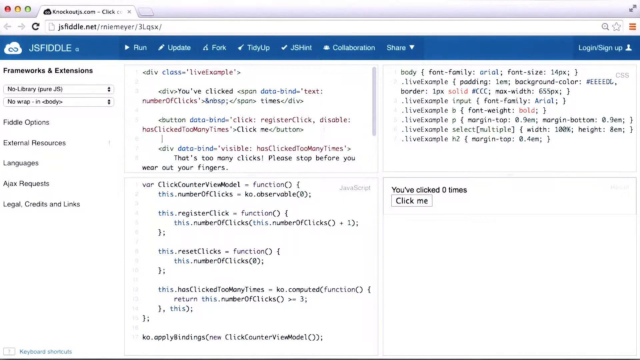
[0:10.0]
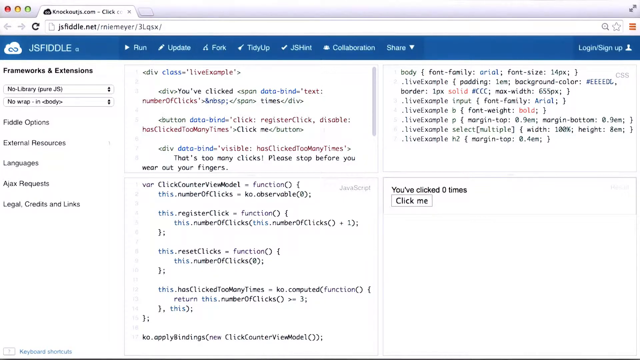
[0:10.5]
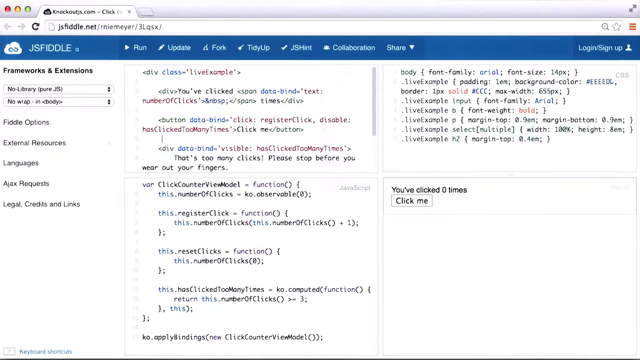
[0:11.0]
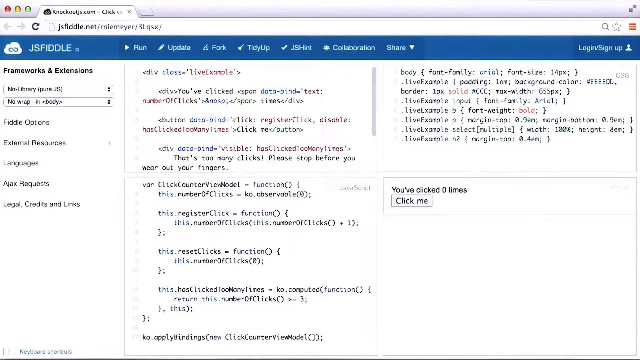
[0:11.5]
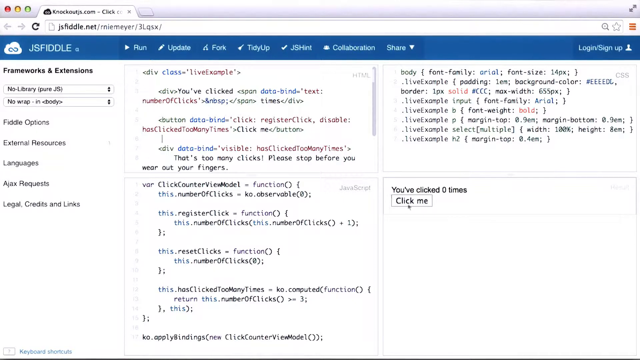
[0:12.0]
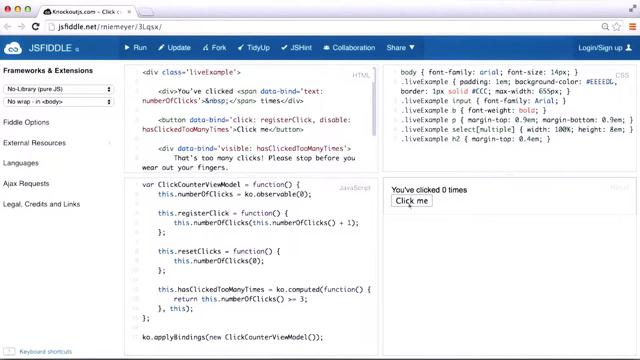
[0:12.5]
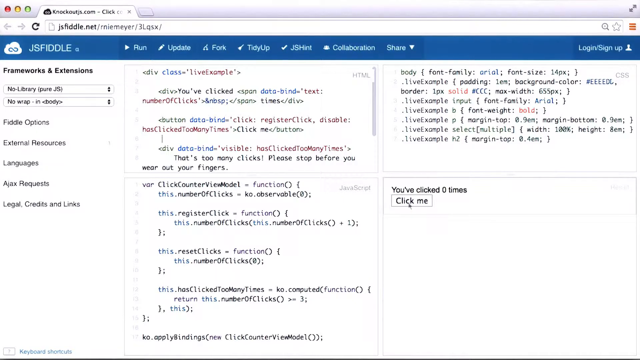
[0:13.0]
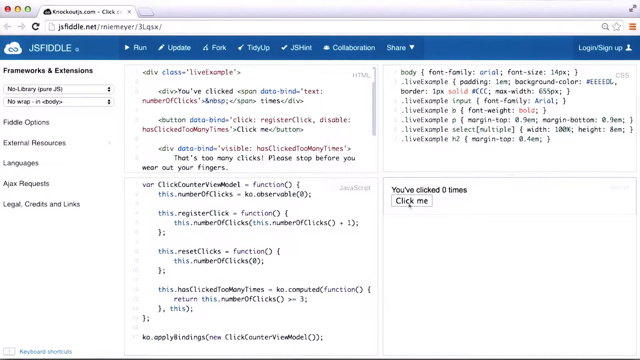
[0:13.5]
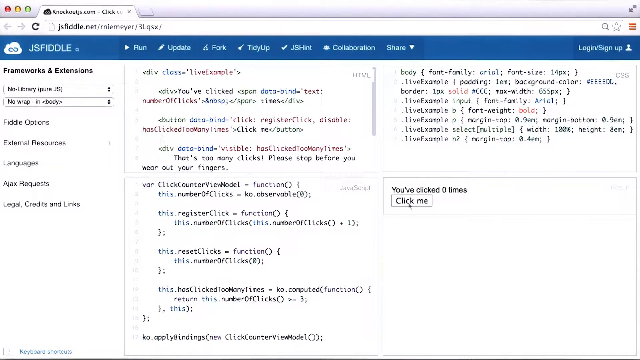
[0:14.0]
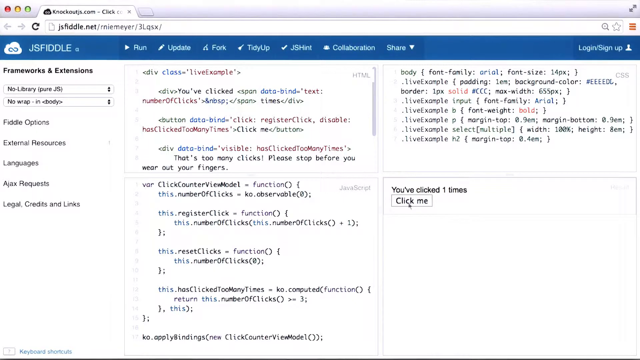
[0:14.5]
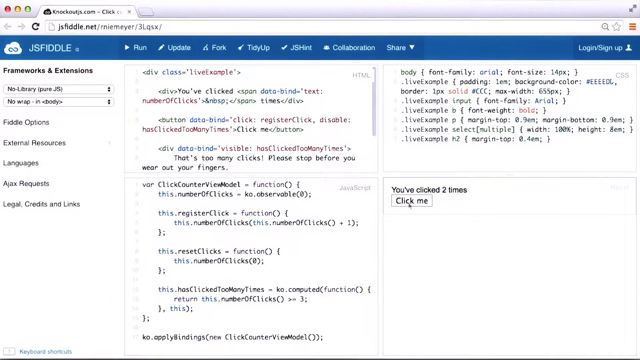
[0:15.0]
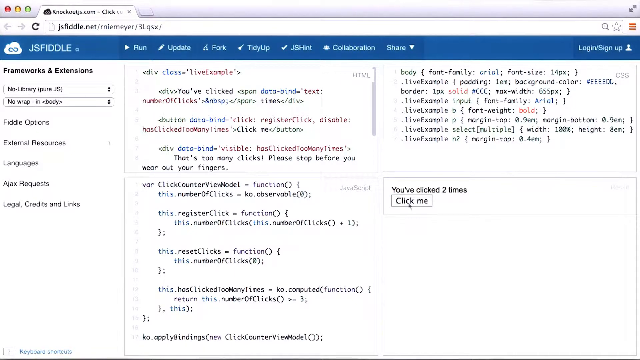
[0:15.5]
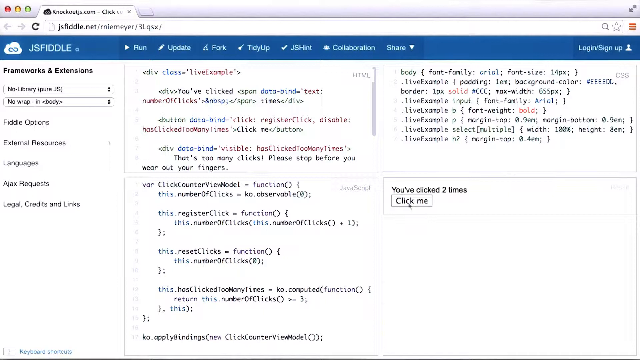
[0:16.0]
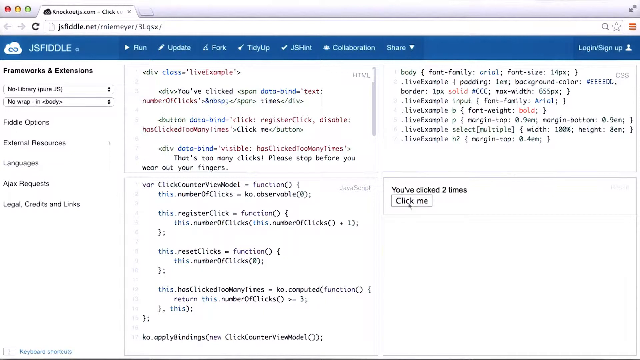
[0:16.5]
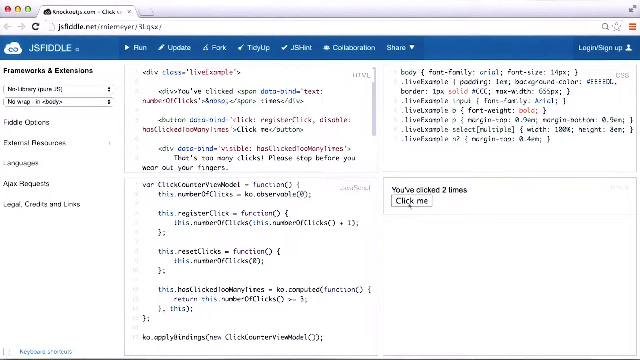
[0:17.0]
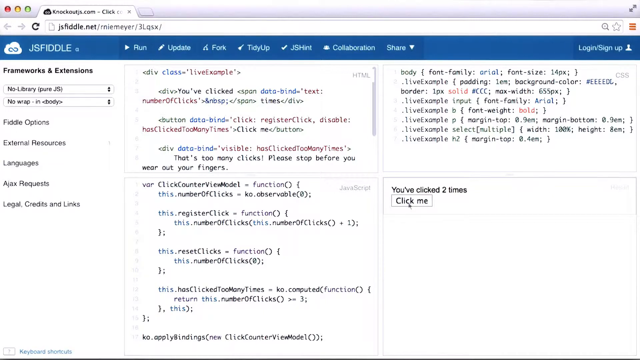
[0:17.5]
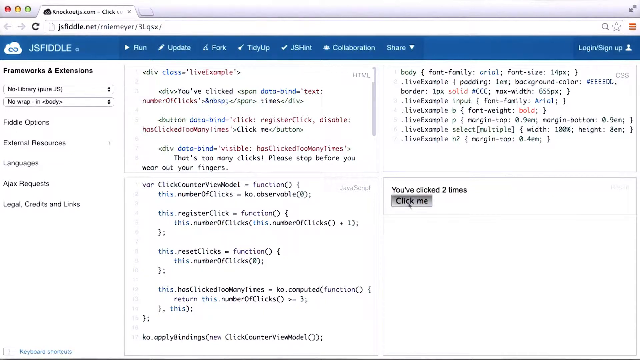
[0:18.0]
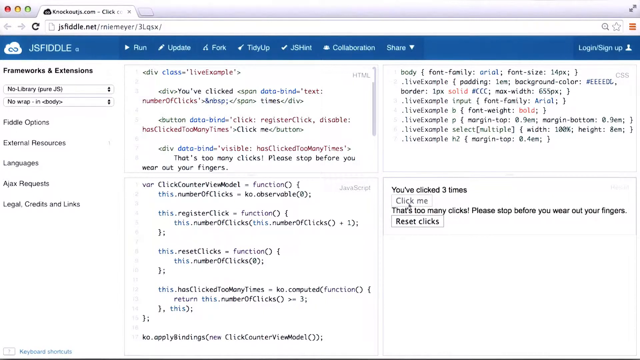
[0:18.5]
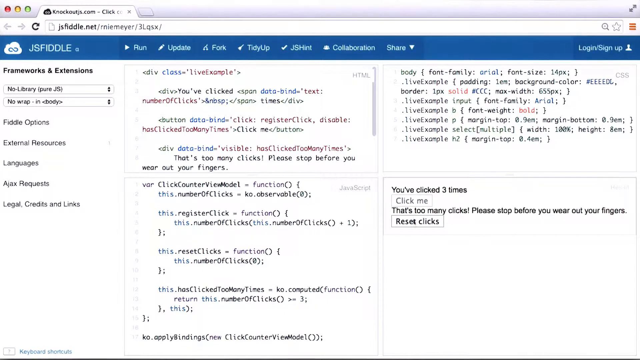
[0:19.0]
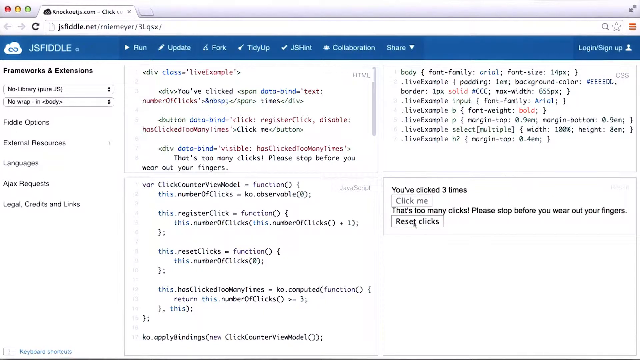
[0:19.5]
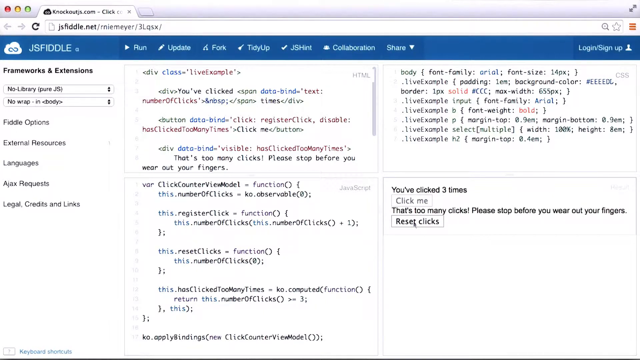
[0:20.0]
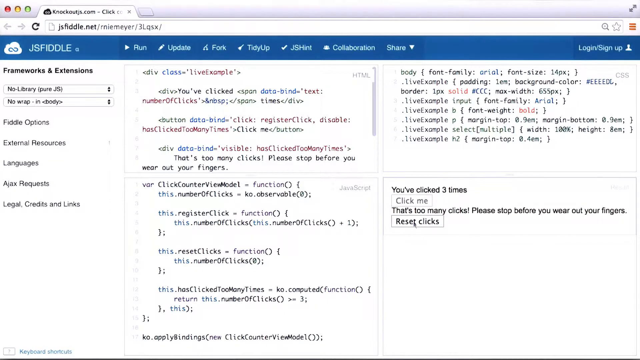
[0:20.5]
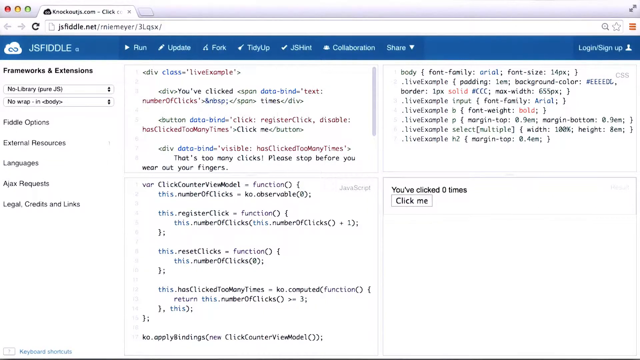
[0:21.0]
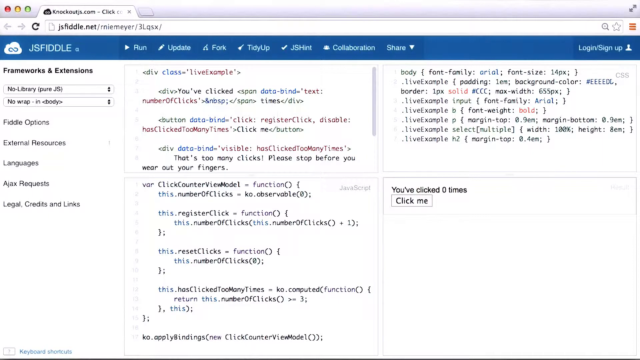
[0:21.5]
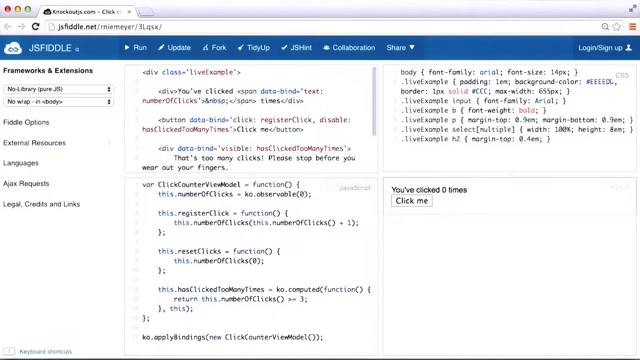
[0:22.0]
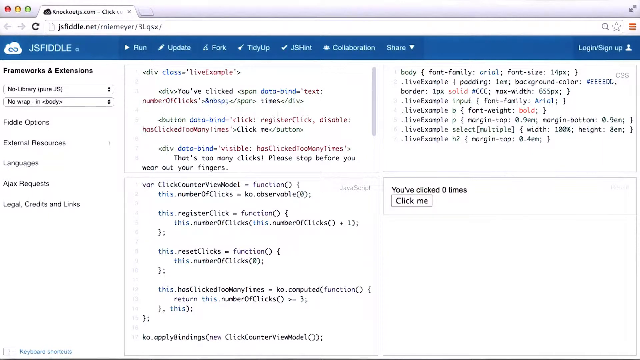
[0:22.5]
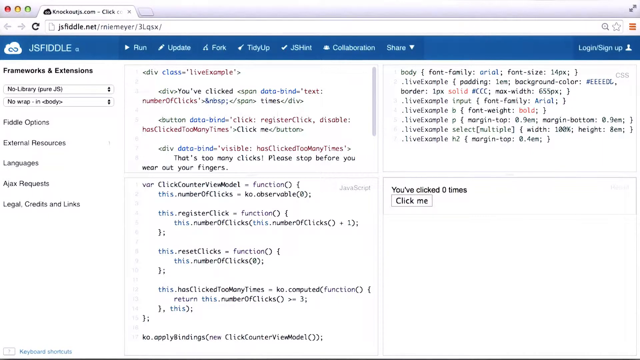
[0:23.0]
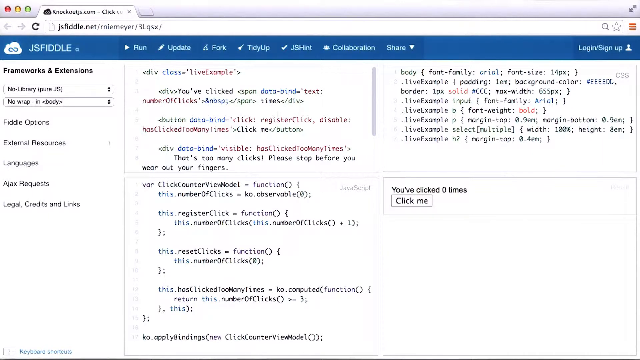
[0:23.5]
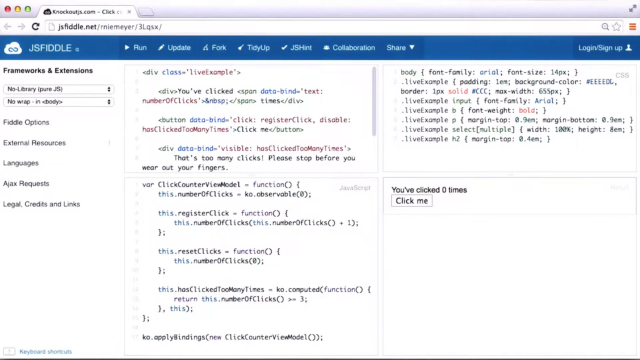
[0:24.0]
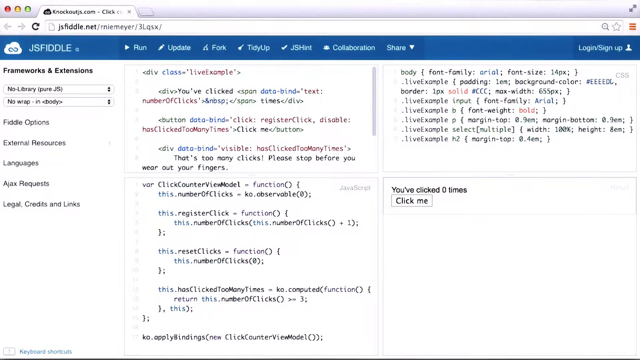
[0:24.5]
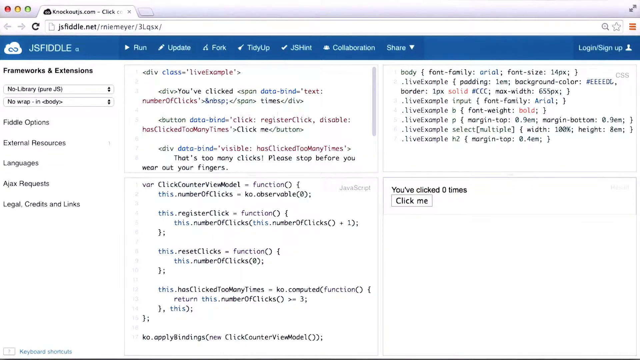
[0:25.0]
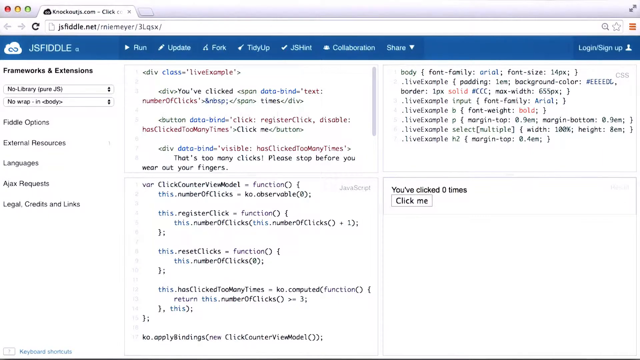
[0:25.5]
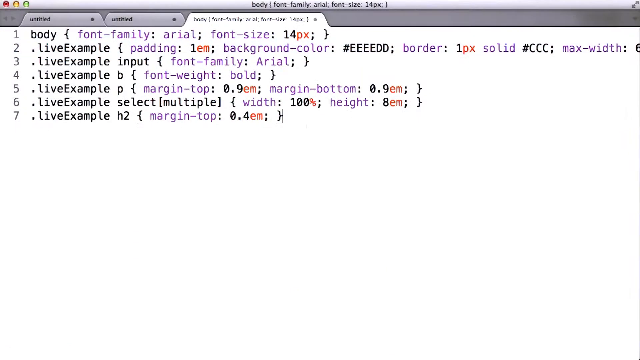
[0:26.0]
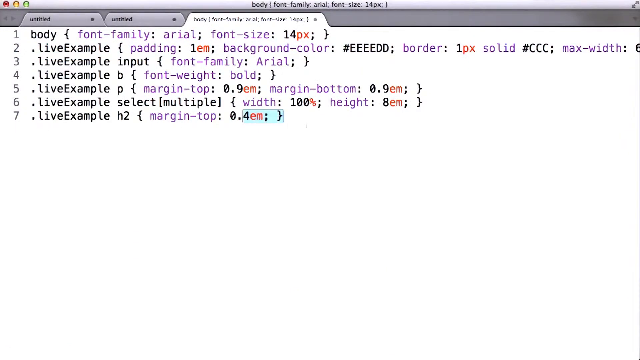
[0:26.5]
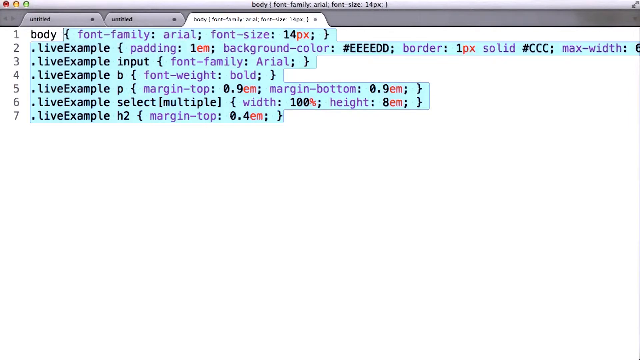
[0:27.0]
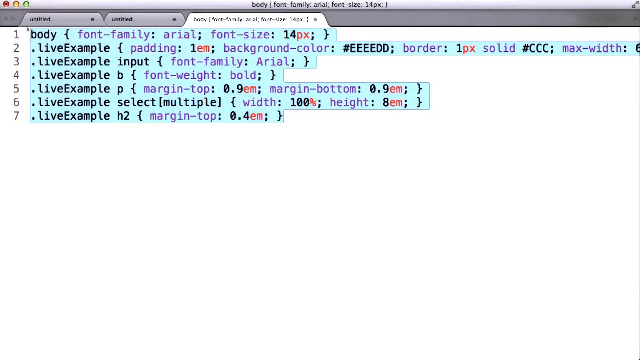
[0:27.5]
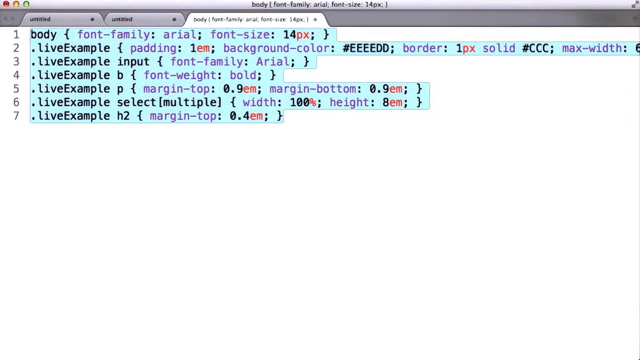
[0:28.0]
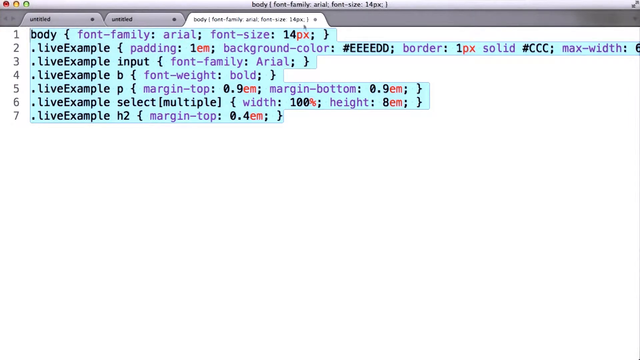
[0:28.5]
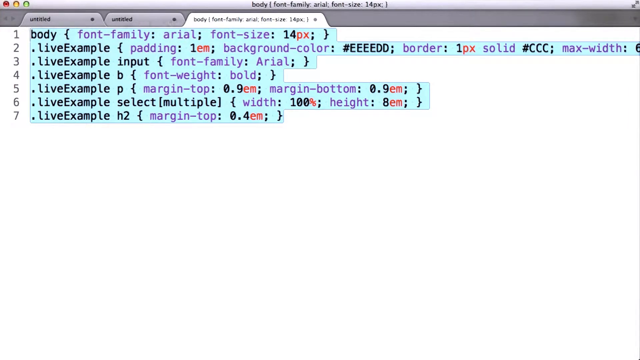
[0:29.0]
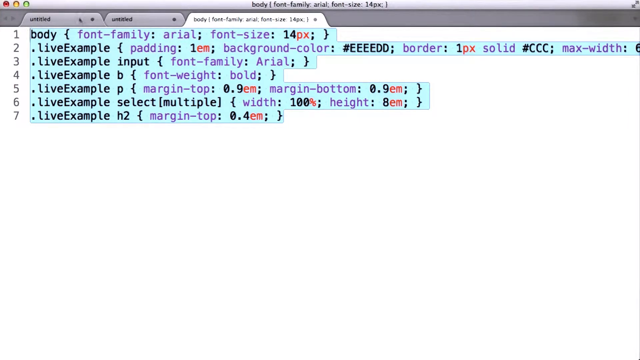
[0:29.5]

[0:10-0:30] The same page shows "You've clicked 0 times" and a "Click me" button. Then the display changes to "You've clicked 2 times", showing that the button keeps track of clicks, and a message reads "That's too many clicks. Please stop before you wear out your fingers." along with a "Reset clicks" button. The view then moves to another page with "body" styling listing various fonts and their details: bold, width, heights, colors and color codes. There are a couple of untitled tabs. The page probably shows how the visible page functions. Text includes "body", "font-family: Arial" and "font-size: 14".